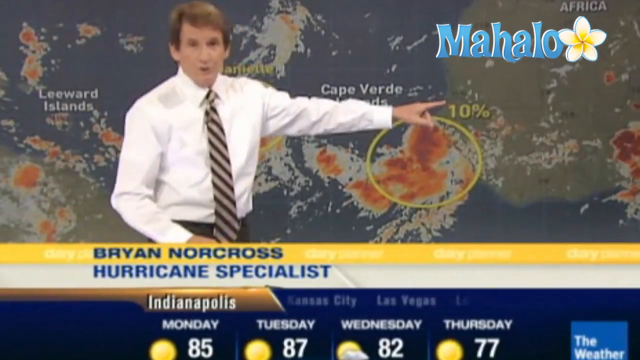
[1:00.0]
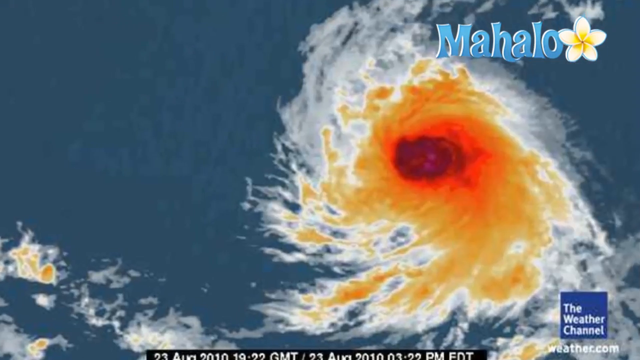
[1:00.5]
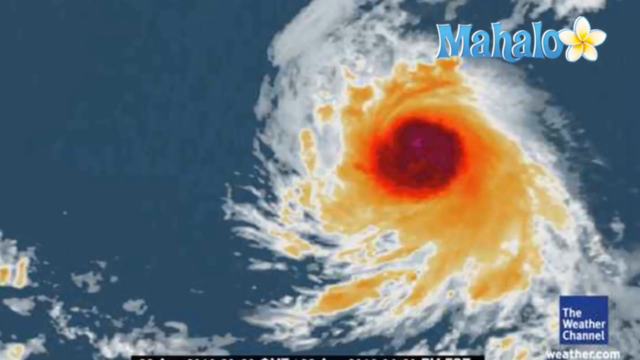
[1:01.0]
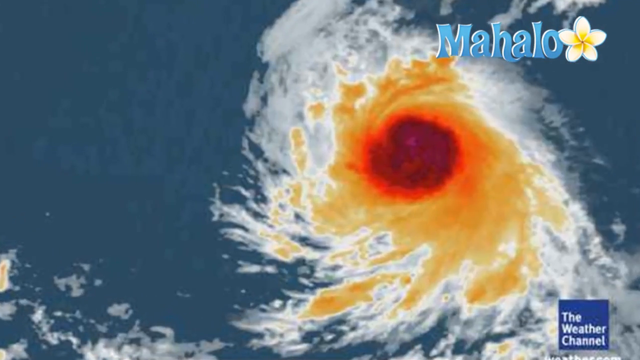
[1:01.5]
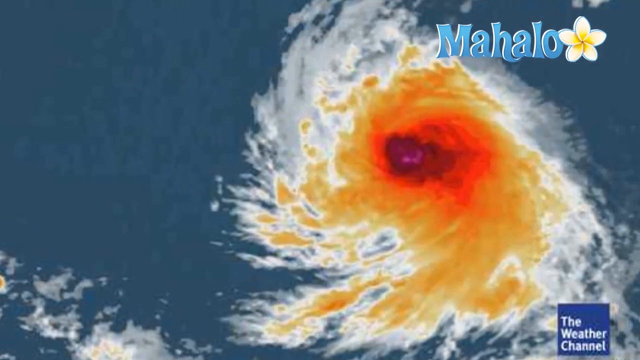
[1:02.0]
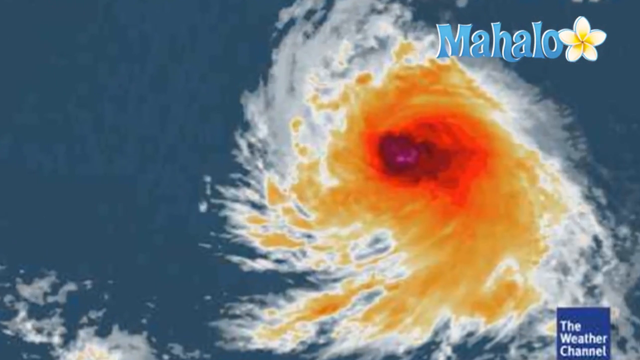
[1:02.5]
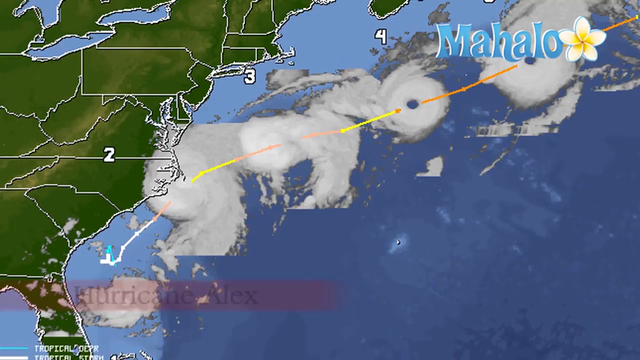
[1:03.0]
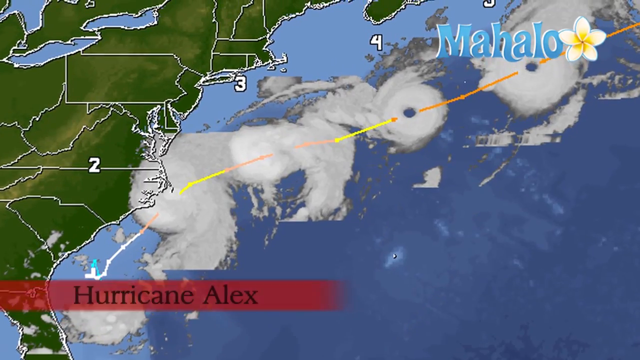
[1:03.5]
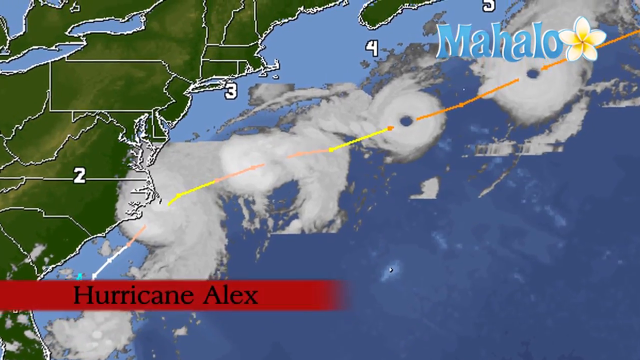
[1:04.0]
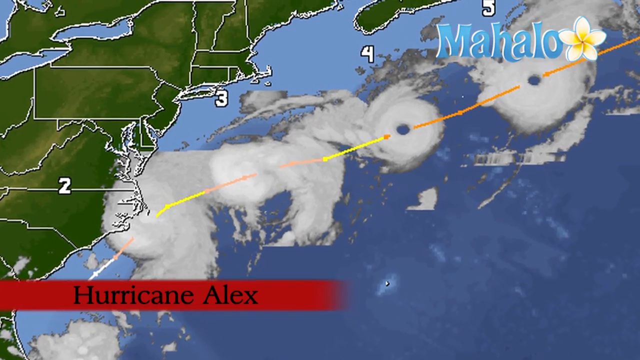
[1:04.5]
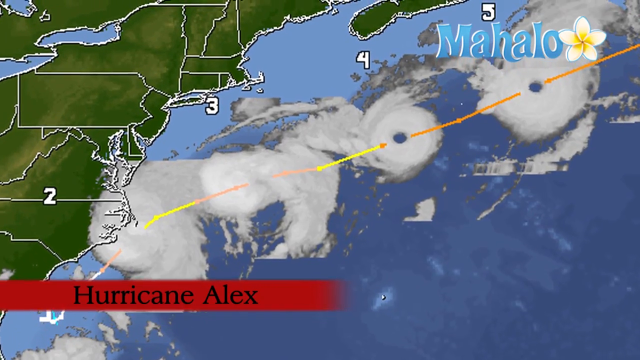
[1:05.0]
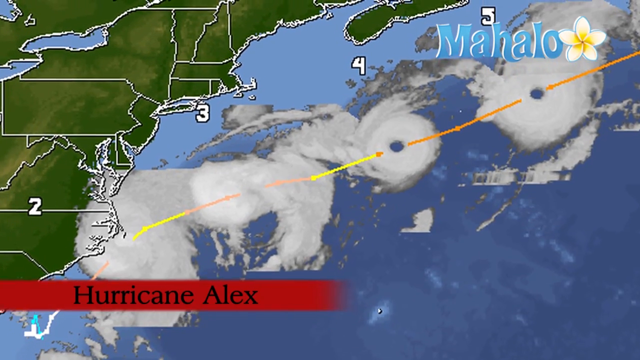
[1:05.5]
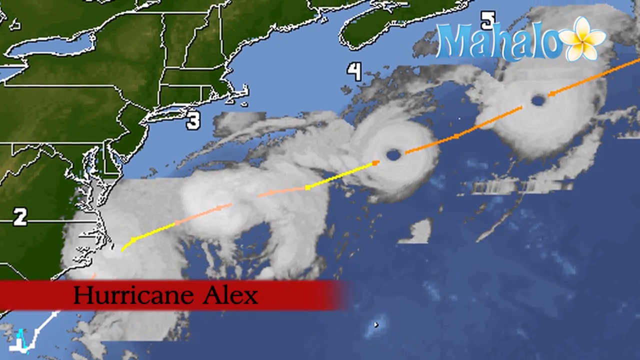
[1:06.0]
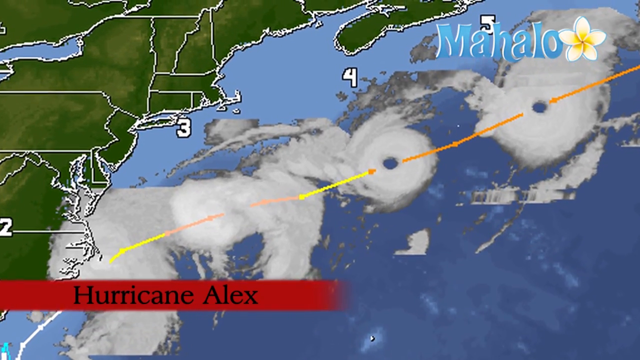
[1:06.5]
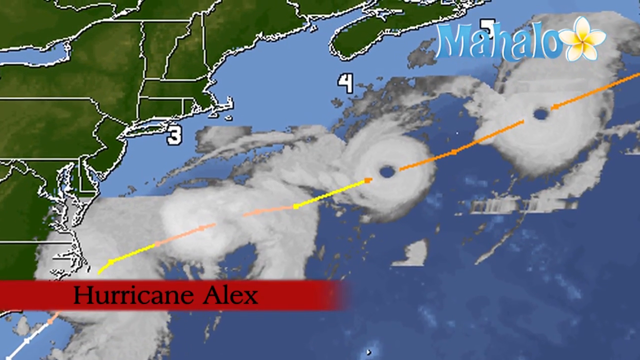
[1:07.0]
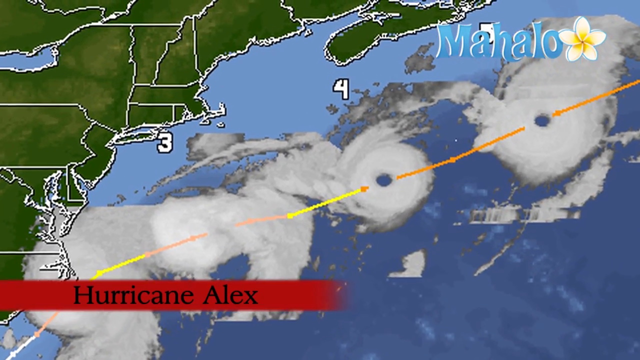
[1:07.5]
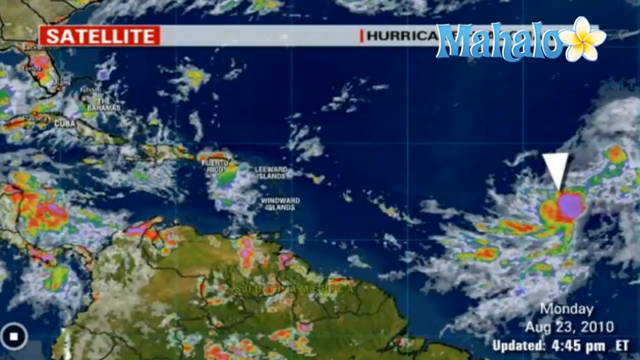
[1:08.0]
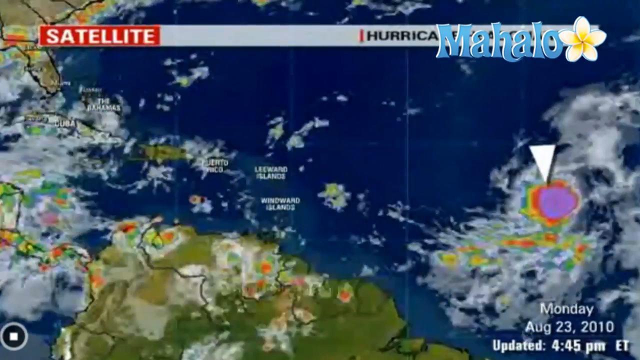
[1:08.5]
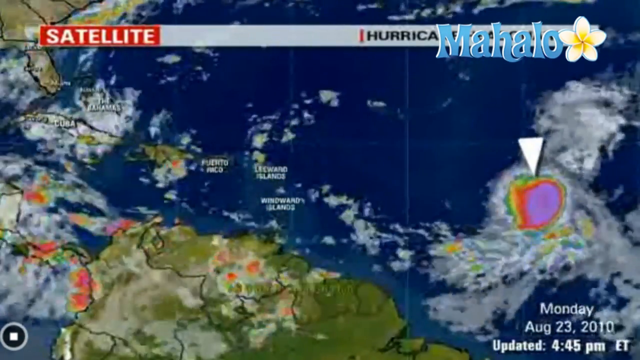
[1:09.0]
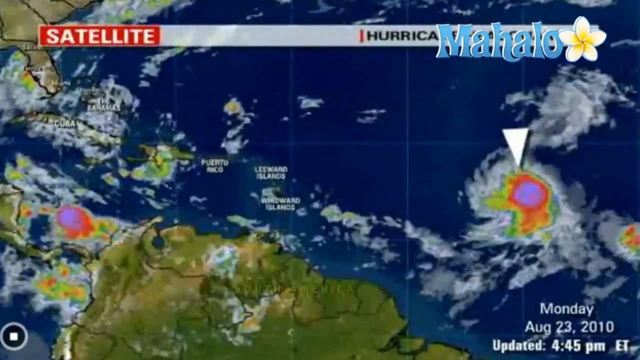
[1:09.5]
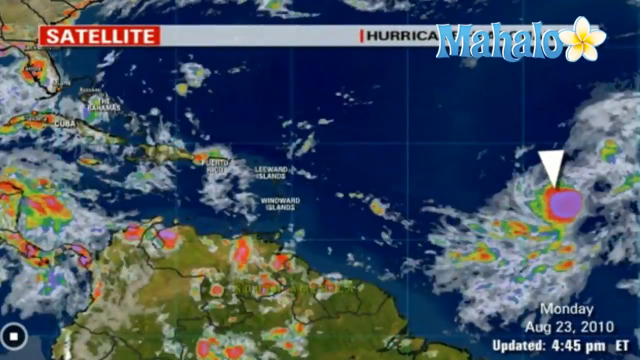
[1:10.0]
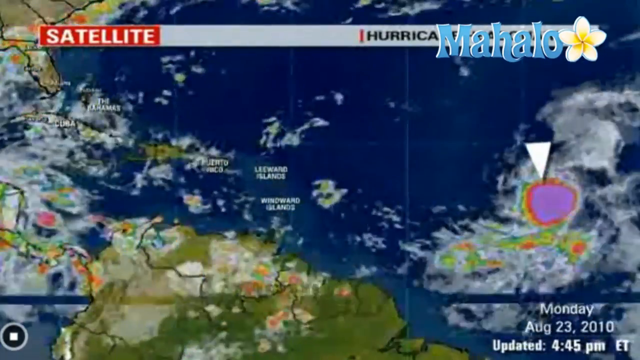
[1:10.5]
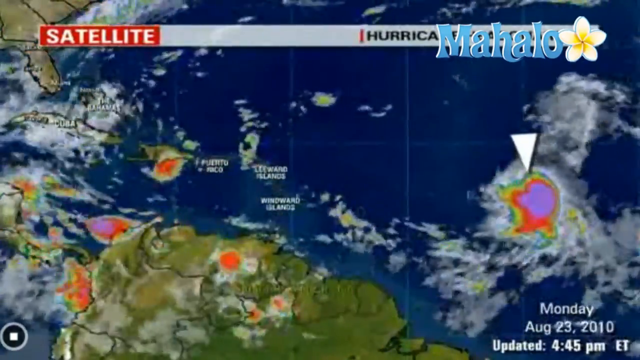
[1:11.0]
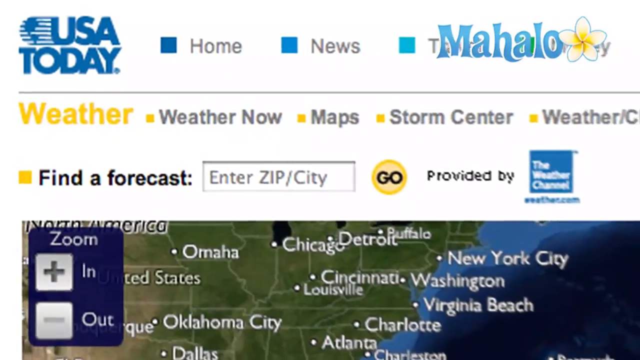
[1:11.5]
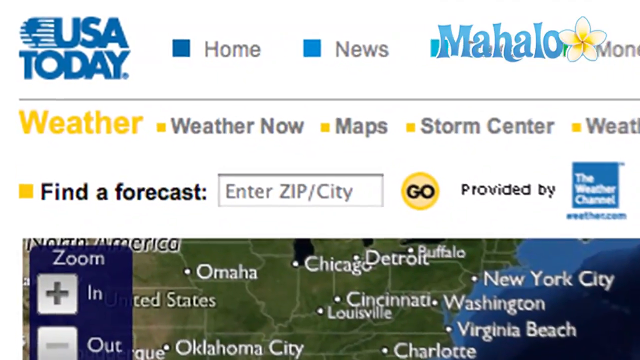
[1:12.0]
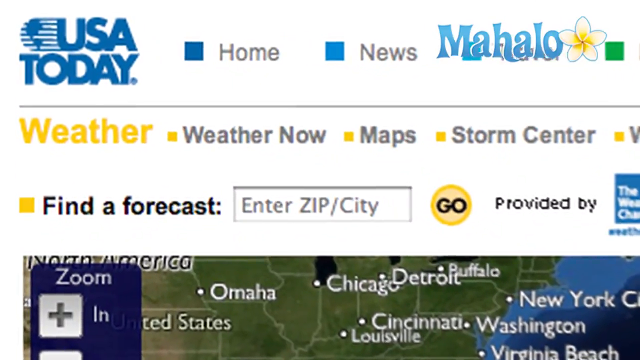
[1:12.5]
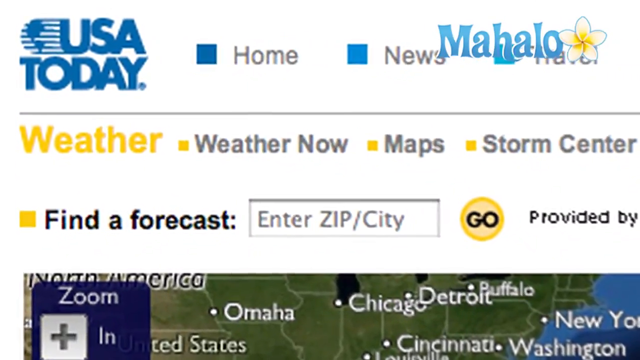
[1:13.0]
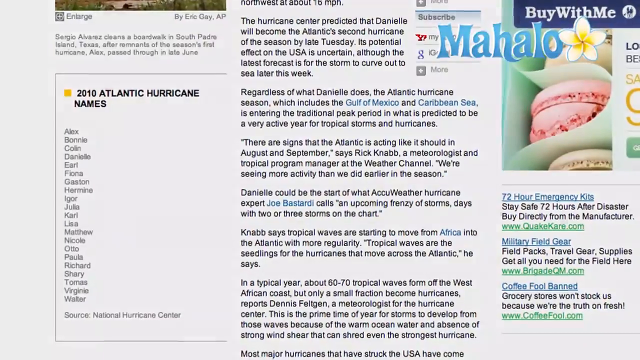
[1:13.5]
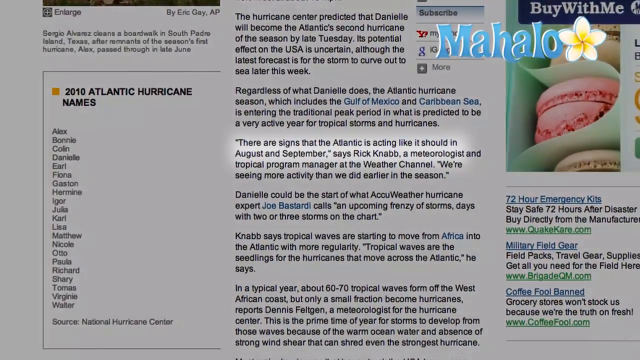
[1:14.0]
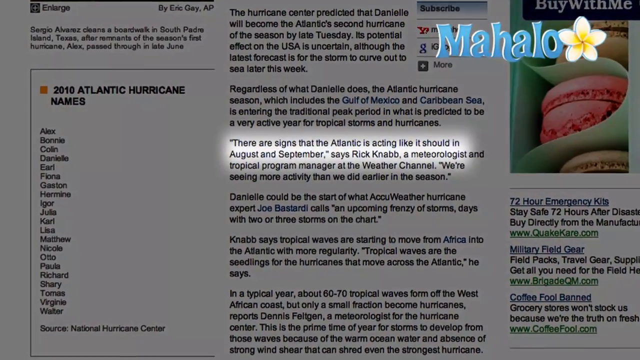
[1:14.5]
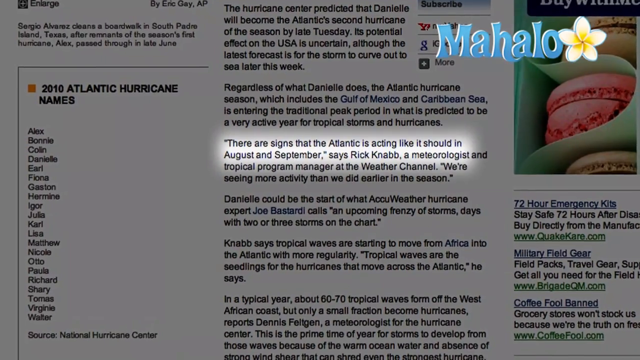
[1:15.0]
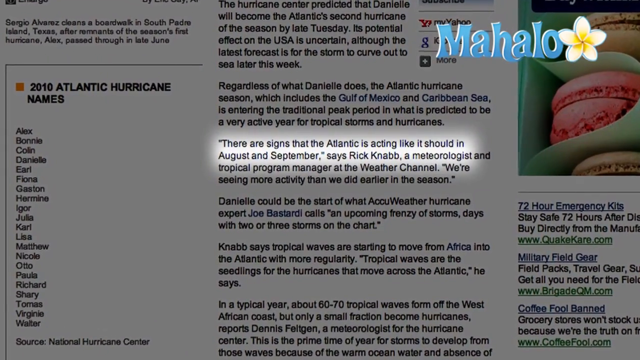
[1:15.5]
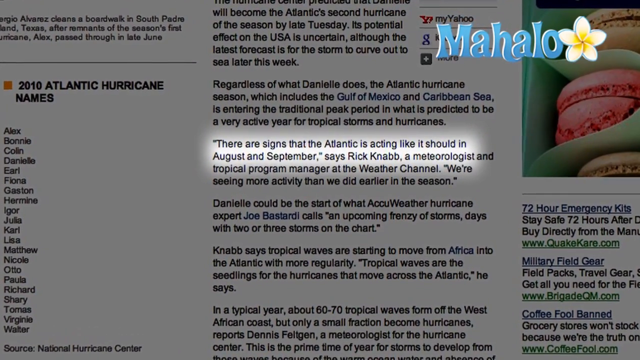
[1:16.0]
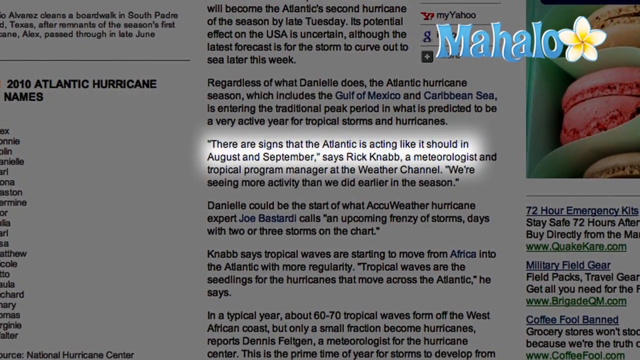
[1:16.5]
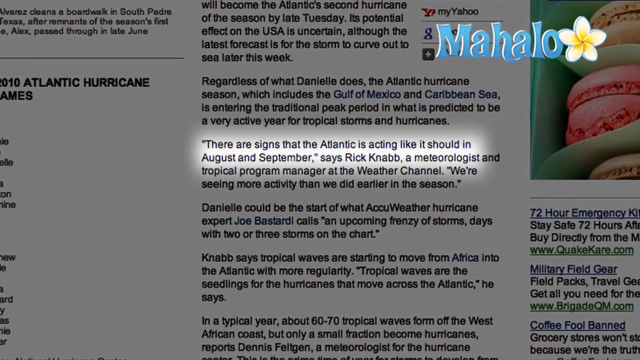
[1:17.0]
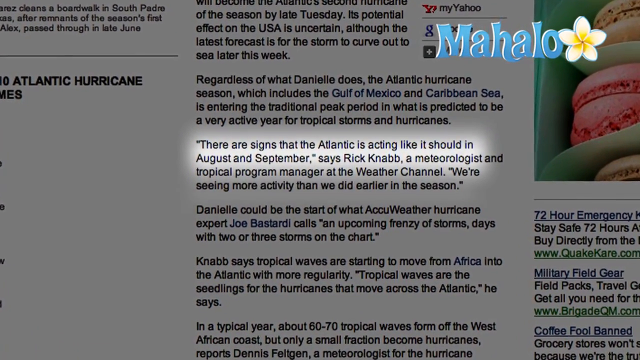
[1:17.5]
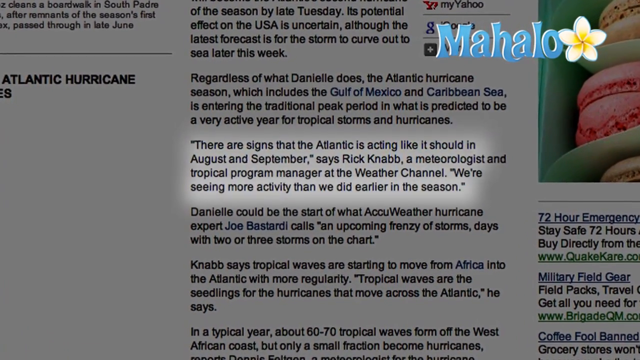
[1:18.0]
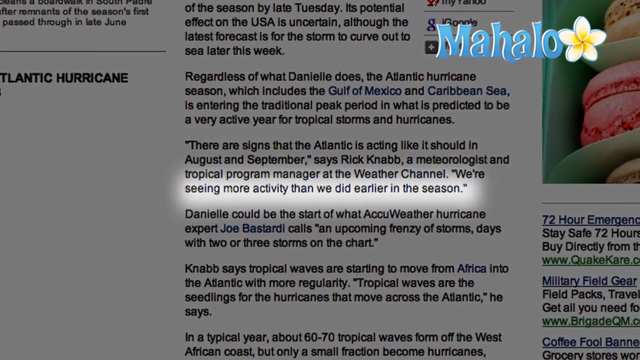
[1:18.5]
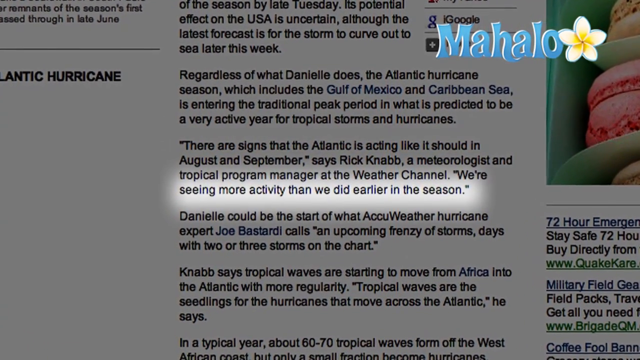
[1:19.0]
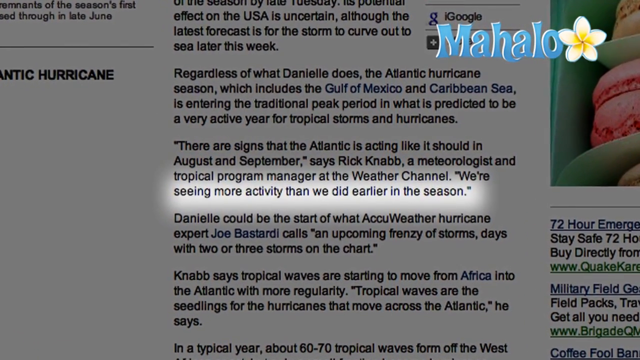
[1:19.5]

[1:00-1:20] The hurricane is shown in a yellow circle as the specialist points out the 10%, and the cyclone appears in a red circle with orange fire coming out of it. A possible hurricane comes from the east-north side, and five places that will not be hit are marked. A purple satellite image shows a hurricane coming from the south basin. A USA Today weather finder forecast is shown with some things being pointed out, and its text reads "there are signs that the Atlantic is acting like it should in August and September" says Rick Knapp, a meteorologist, "seeing more activity than we did earlier in the season." The text also includes the line "Daniel could be the start of what".